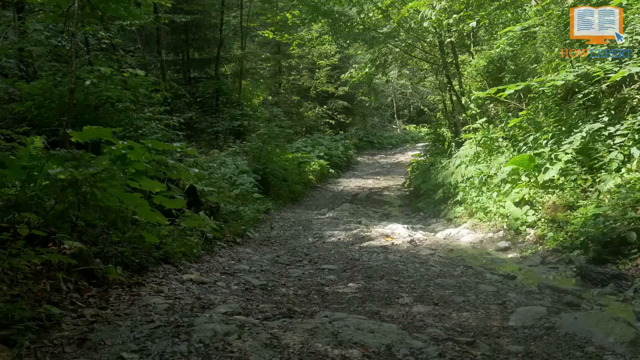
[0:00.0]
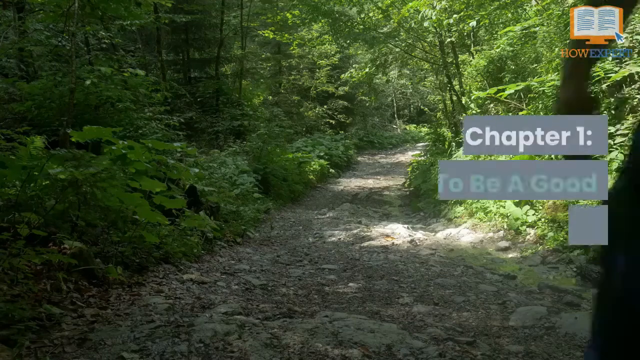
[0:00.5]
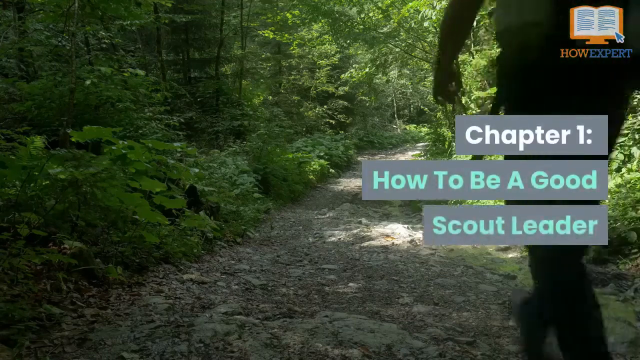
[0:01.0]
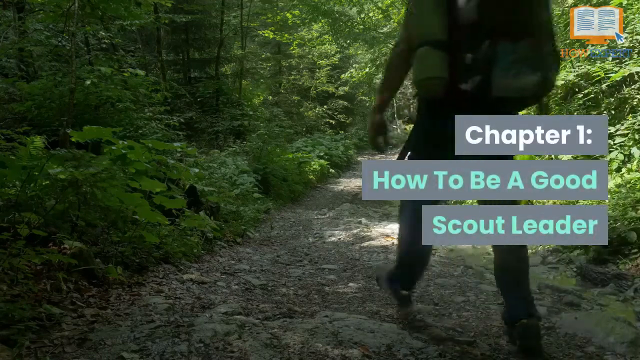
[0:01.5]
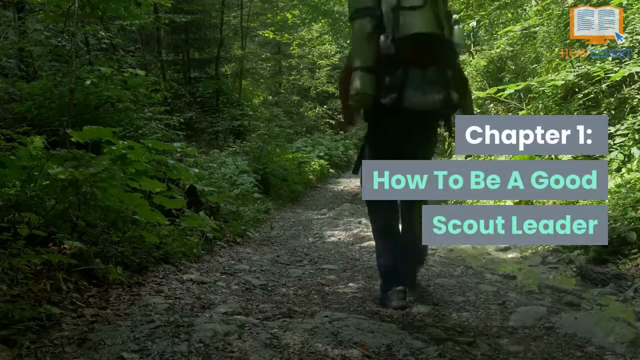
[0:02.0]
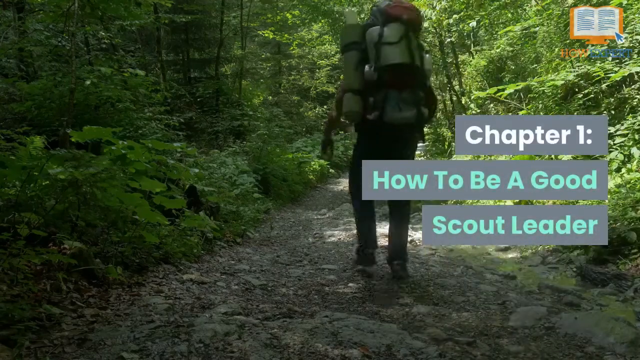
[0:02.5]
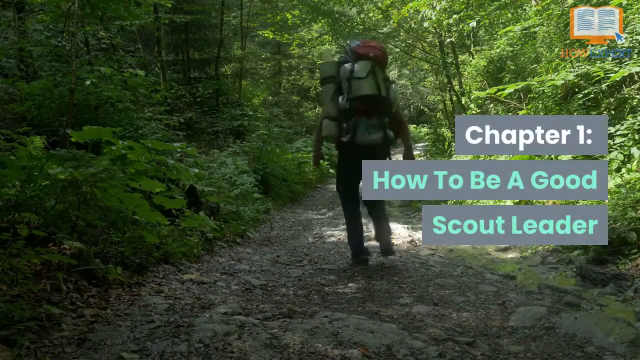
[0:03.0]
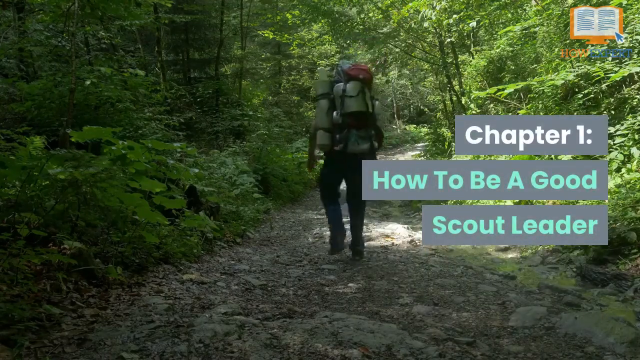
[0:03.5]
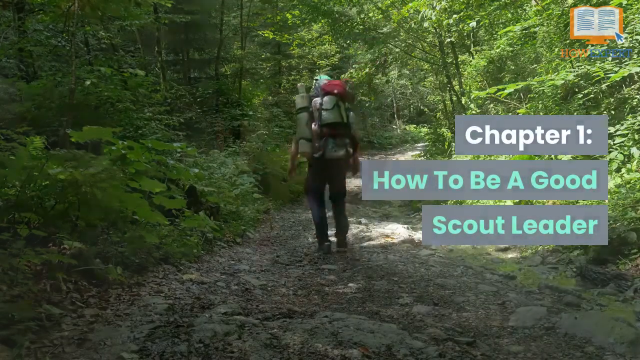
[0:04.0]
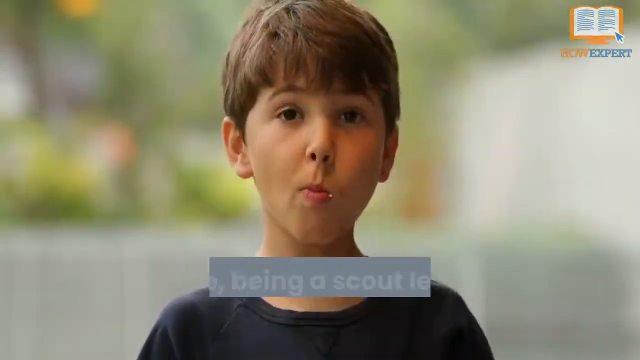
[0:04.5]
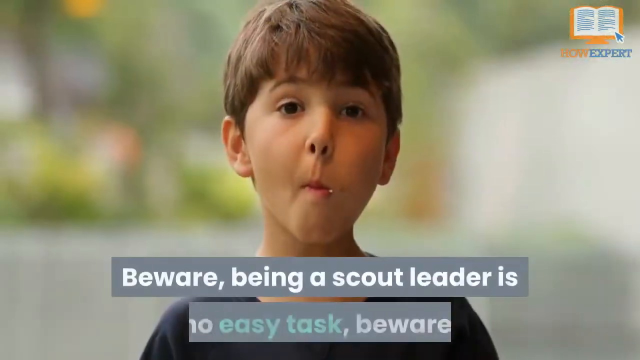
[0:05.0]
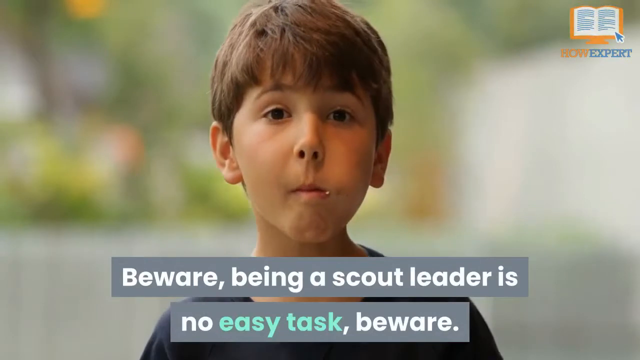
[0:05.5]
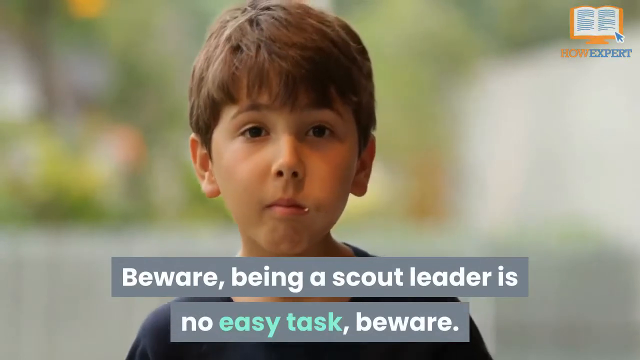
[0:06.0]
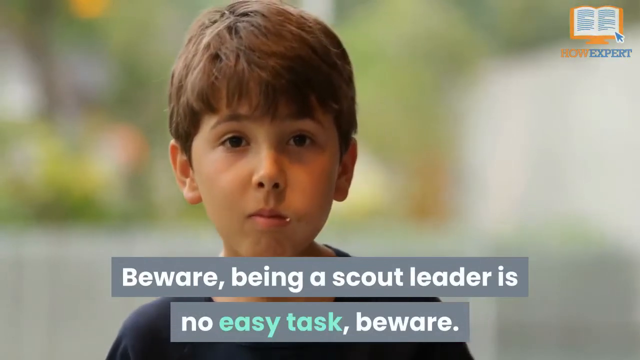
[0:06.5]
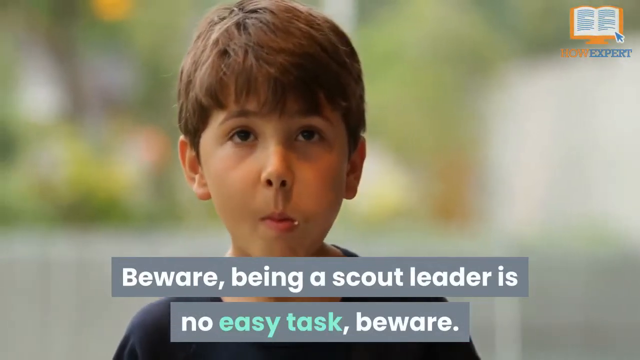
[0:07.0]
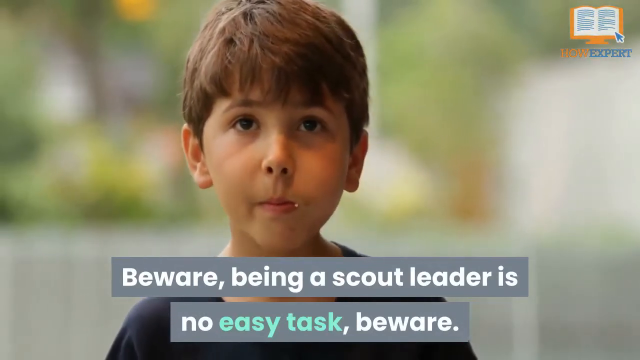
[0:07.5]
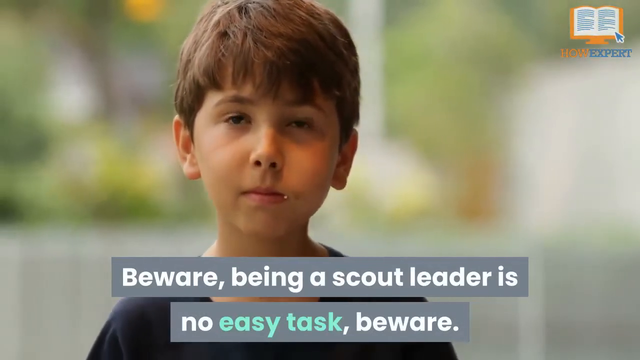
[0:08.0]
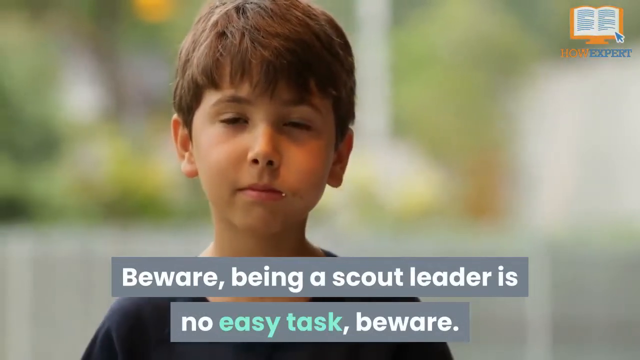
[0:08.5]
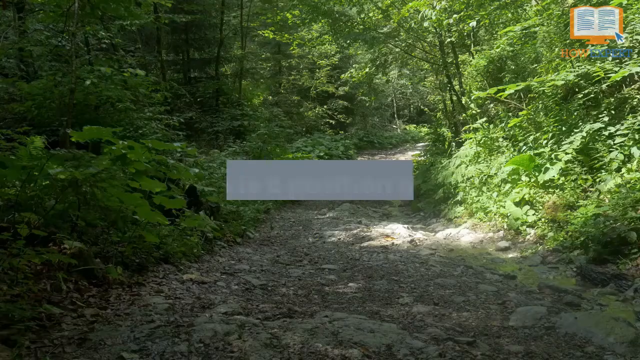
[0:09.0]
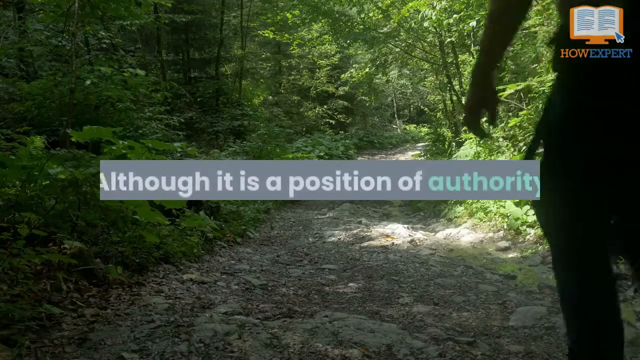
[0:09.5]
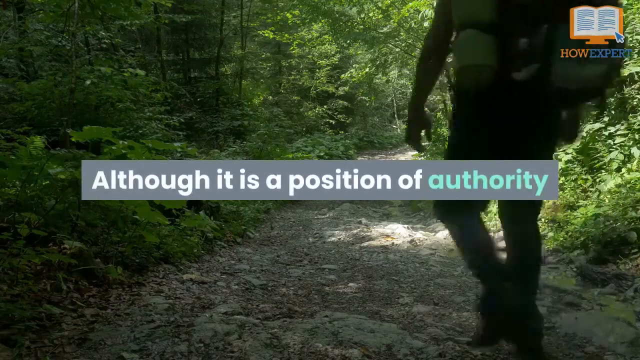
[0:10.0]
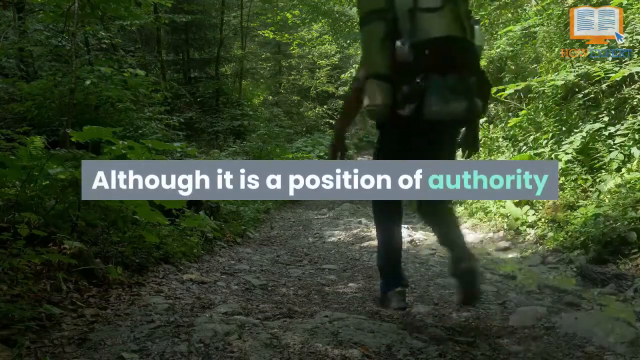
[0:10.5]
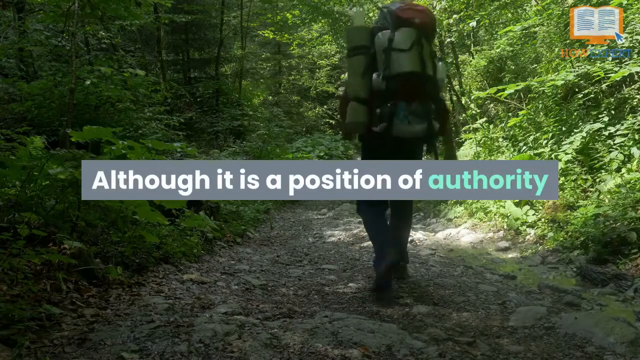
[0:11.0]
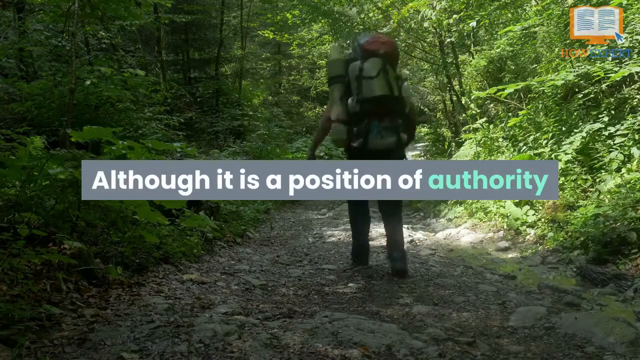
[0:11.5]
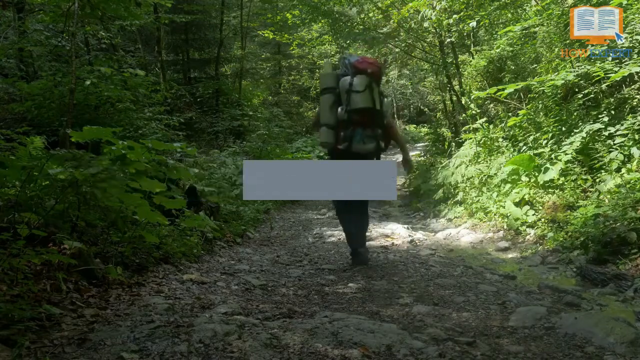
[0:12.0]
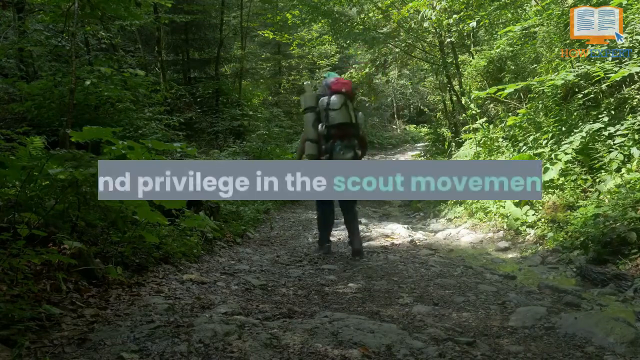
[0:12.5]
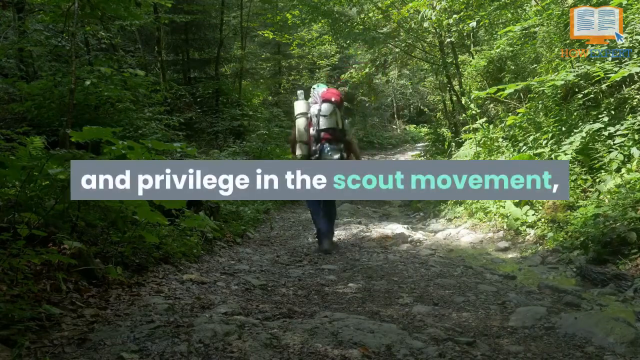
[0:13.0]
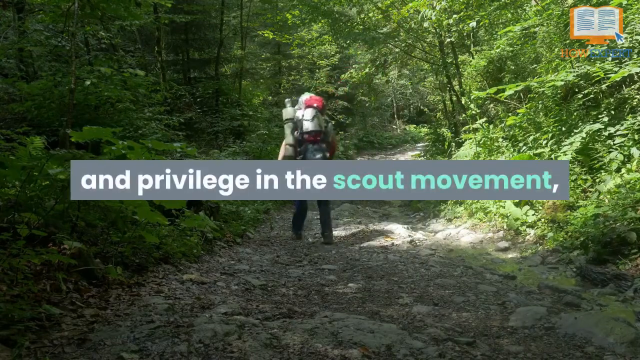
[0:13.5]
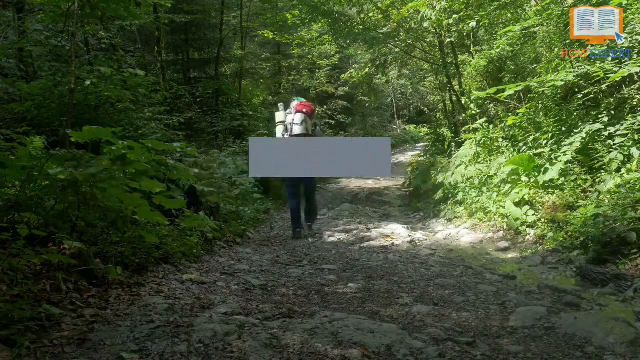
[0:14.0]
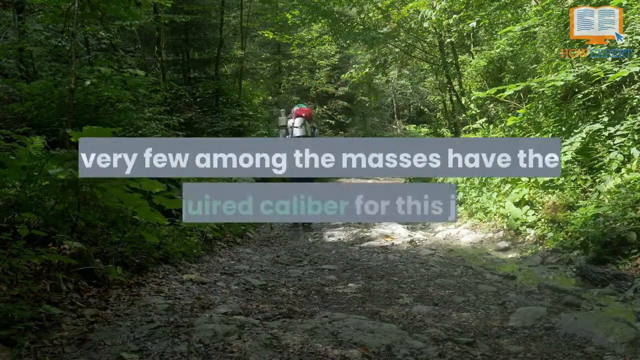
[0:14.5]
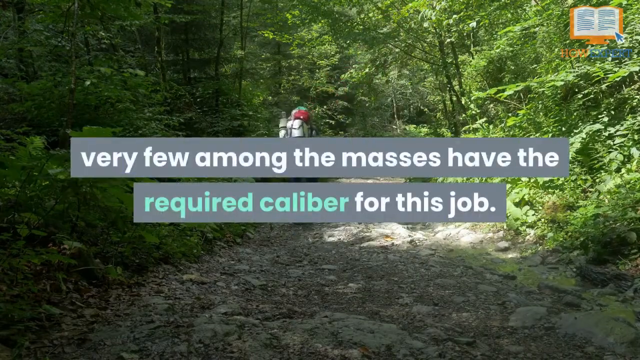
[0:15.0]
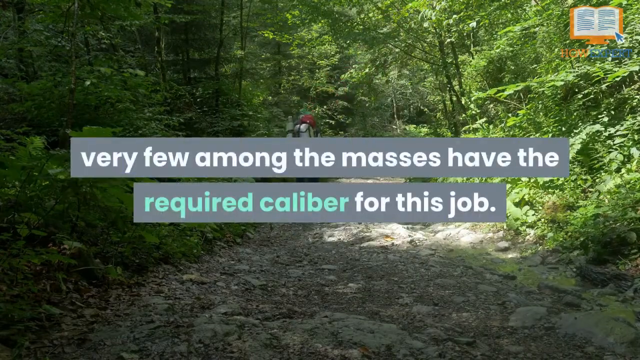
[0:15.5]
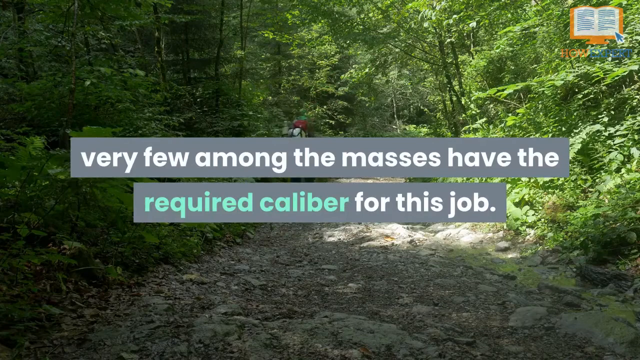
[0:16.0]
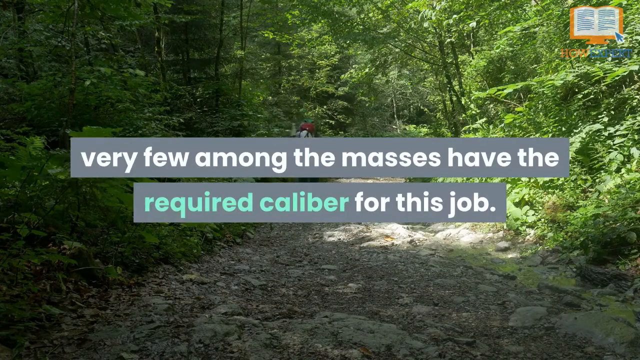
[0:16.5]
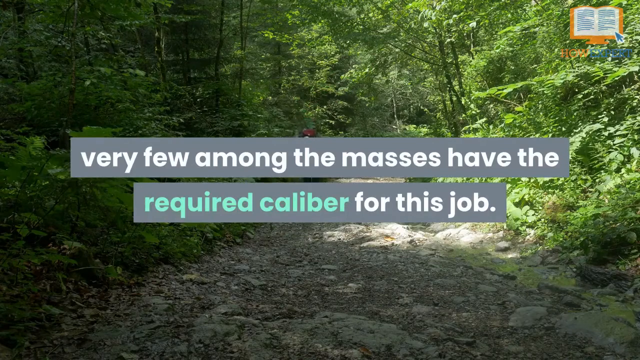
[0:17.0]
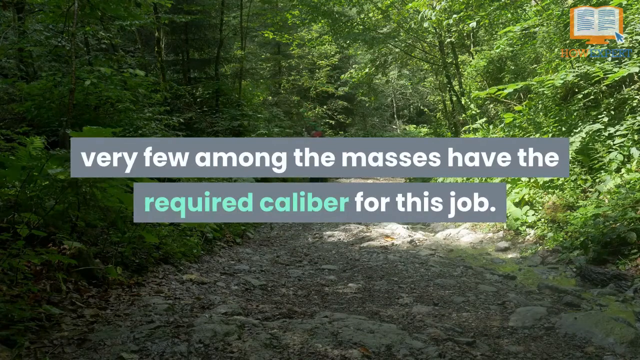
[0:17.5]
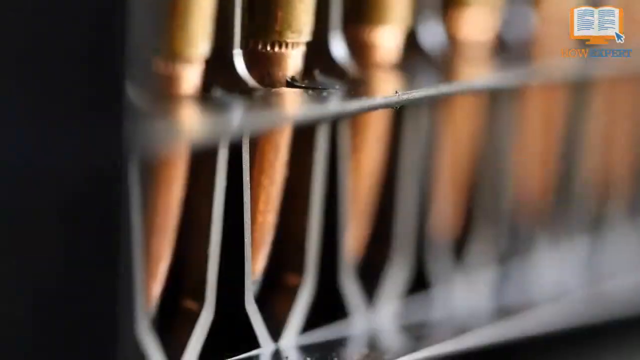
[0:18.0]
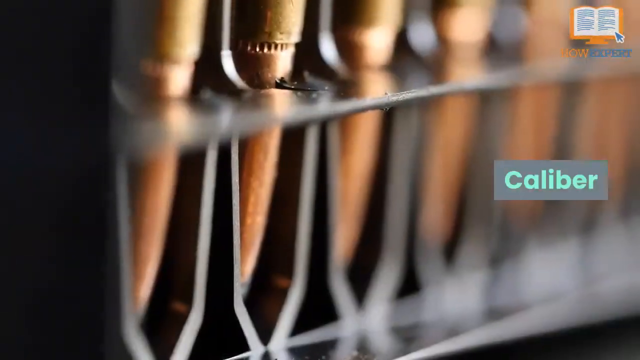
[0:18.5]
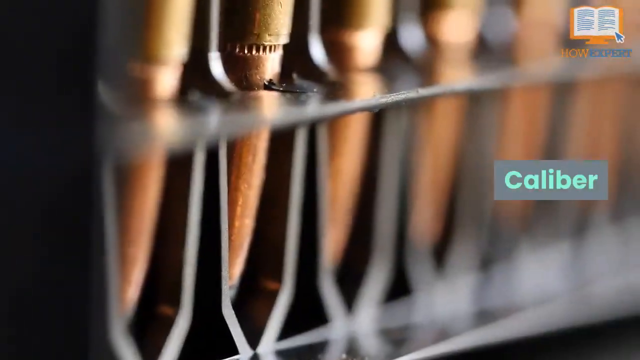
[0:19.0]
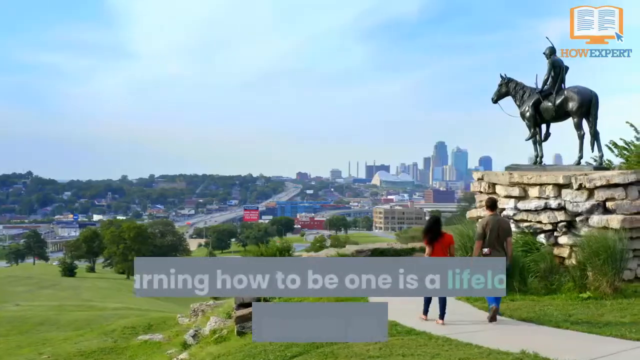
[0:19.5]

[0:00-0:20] A woodland or forest trail appears, with quite a bit of greenery on either side. The trail seems to be a mixture of dirt and rocks, and some sunlight streams in from the right side. In the top right corner there looks to be an icon, apparently some sort of book. A hiker comes in from the right side, and a title appears: "chapter one, how to be a good scout leader." The words are in gray boxes; "chapter one" is in white, and the rest of the words are a greenish sea foam color. The hiker moves out into the background. Then a young white boy with short brown hair appears, apparently eating something. The word "beware" appears, followed by more text in the same sort of font as the title: "beware being a scout leader is no easy task" and "although it is a position of authority and privilege in the scout movement a very few among the masses have the required caliber for this job." More shots follow of the hiker walking along the trail, and what seems to be a shot of bullets appears when the word "caliber" is shown. A brief shot follows of what looks like a statue of somebody on a horse on some rocks overlooking a town, with the text "learning how to be one is a lifelong job," and then the shot cuts out.